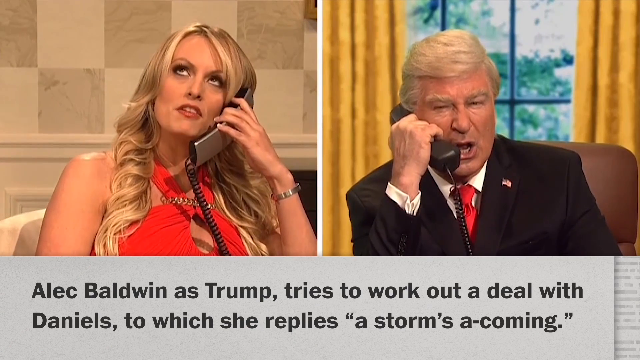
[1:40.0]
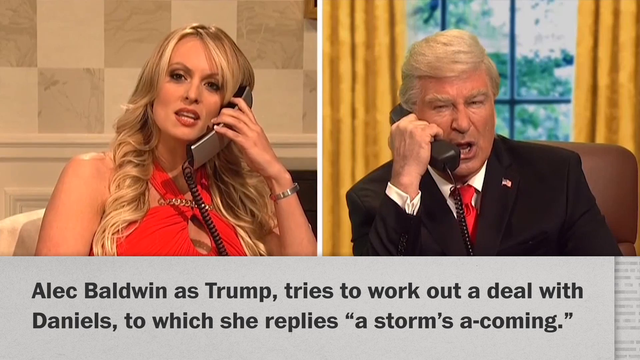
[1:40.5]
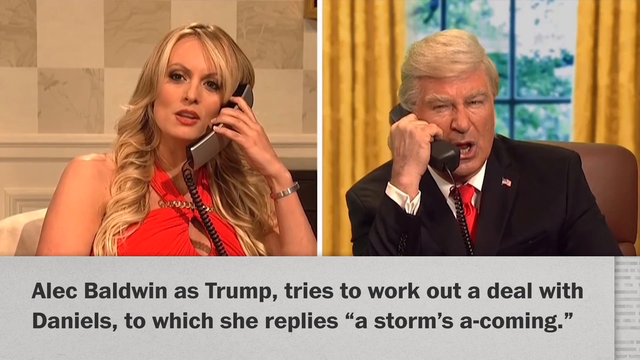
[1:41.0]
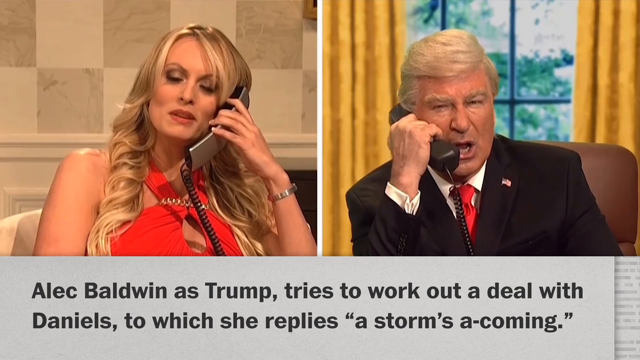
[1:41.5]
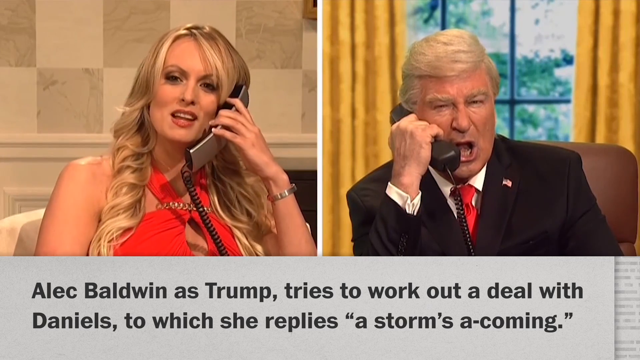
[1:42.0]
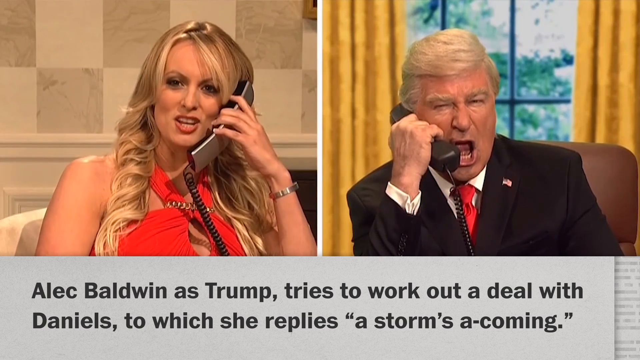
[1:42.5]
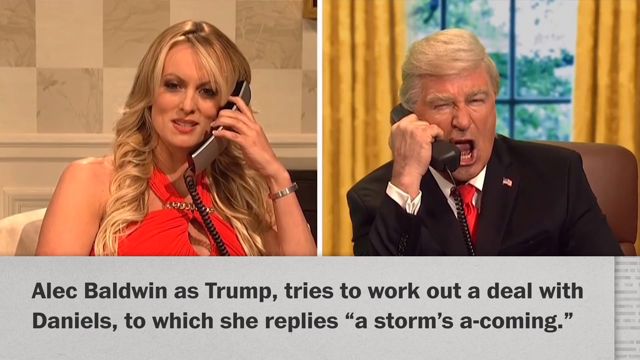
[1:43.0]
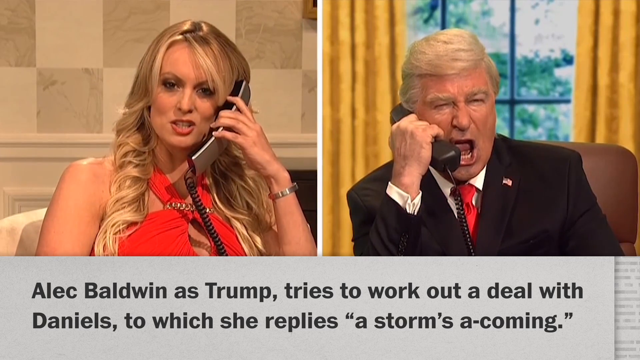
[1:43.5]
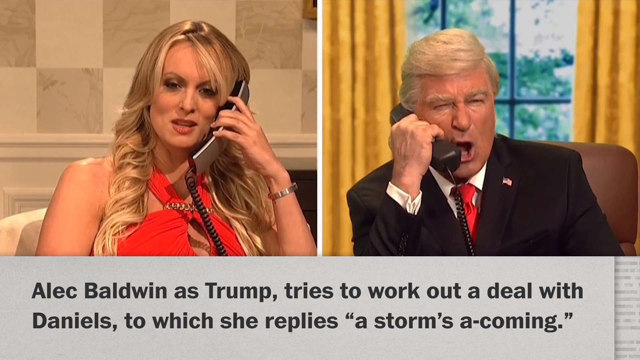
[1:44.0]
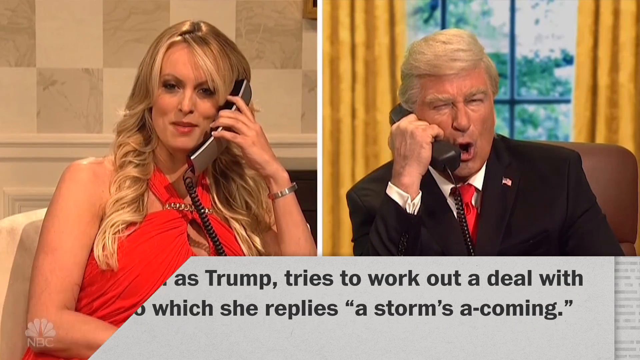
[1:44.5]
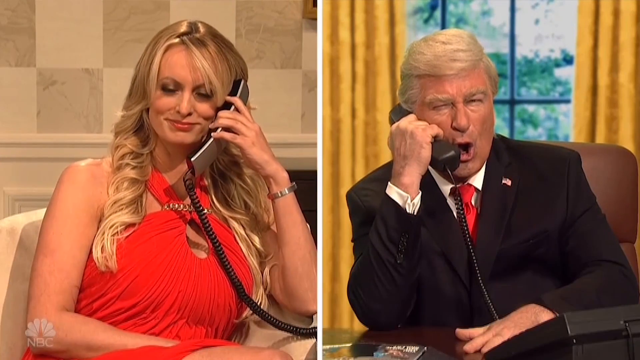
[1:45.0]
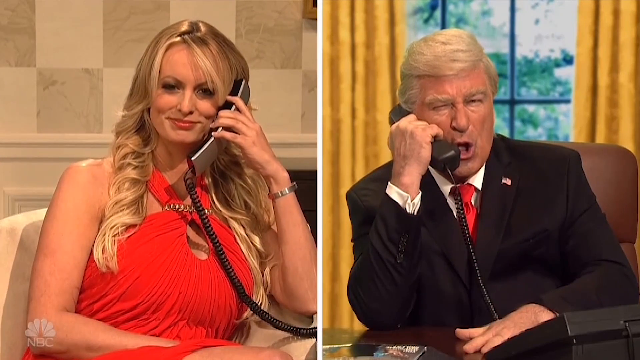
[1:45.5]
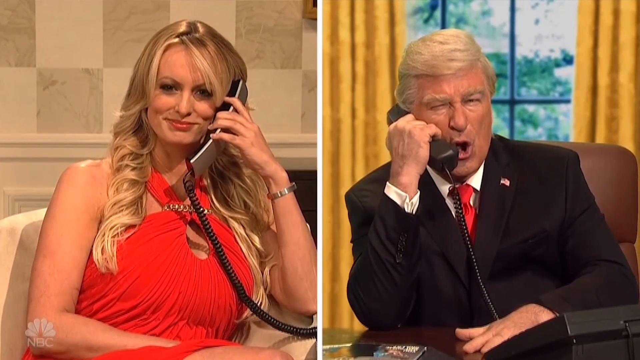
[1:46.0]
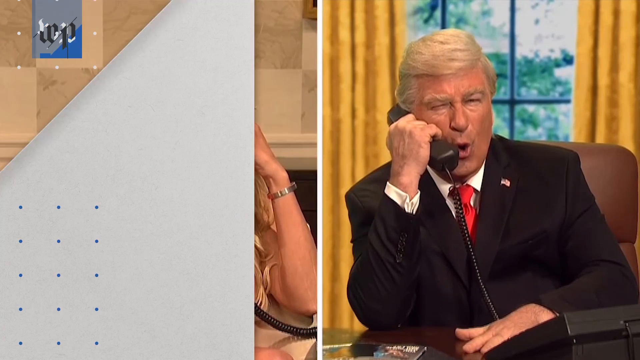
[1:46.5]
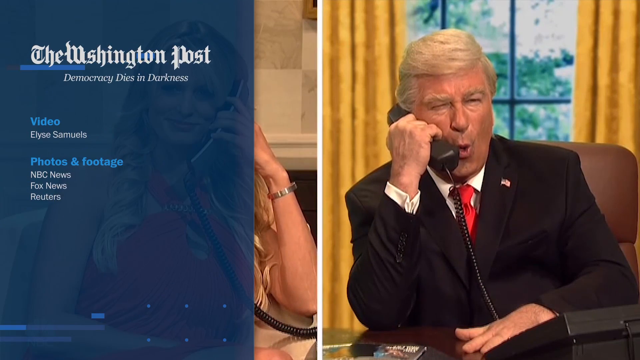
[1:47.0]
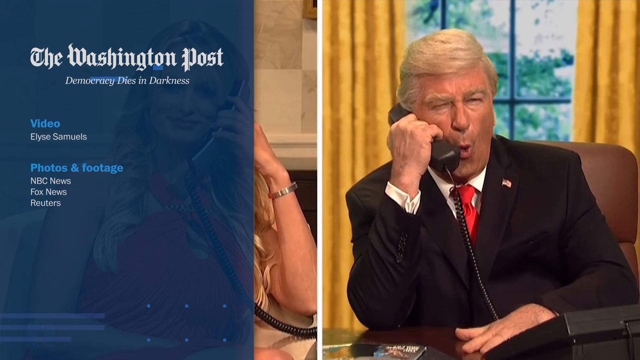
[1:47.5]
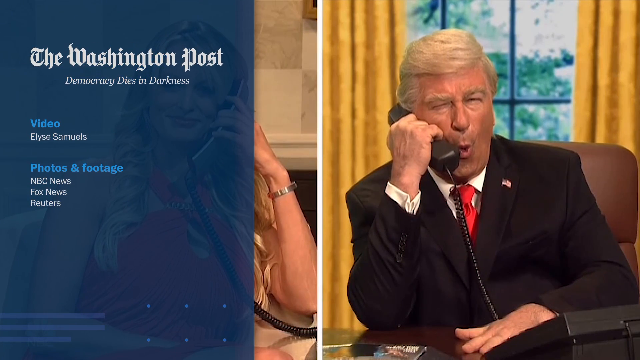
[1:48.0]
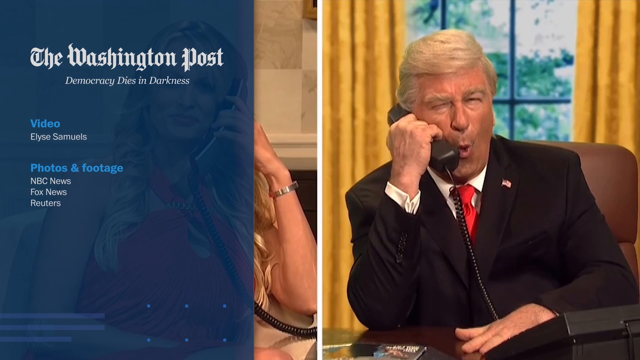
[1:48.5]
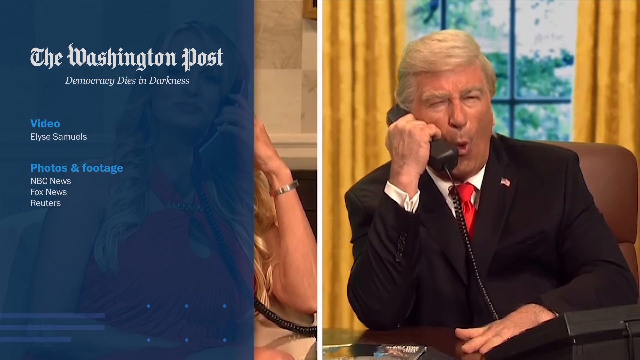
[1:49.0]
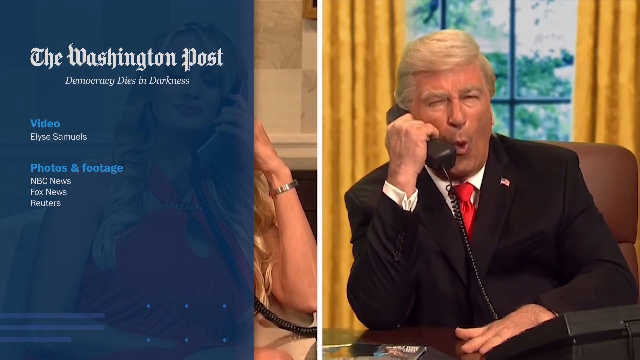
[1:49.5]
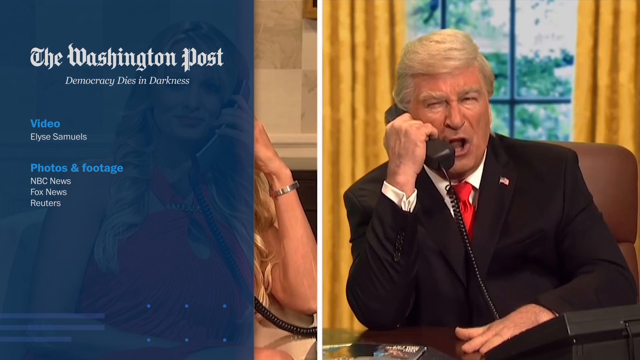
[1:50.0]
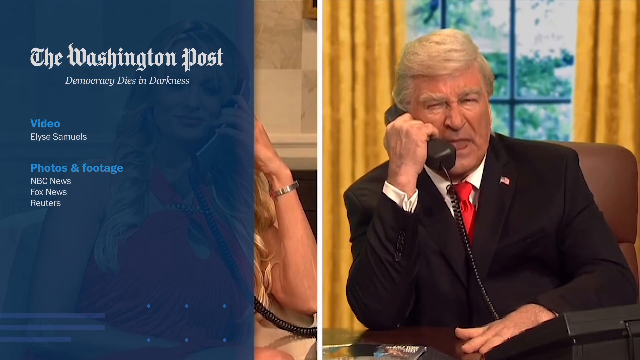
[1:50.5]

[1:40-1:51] On a split screen, text identifies Alec Baldwin as Trump, who speaks to the real Stormy Daniels. The two talk to each other, and Trump looks like he is yelling, with his mouth open. Text reading "the Washington Post" then appears on Stormy Daniels' side of the screen, and the video stops.